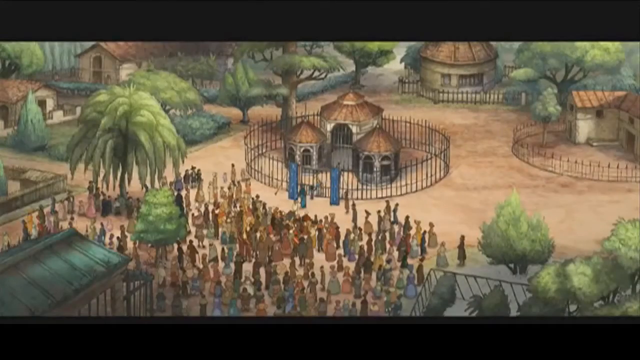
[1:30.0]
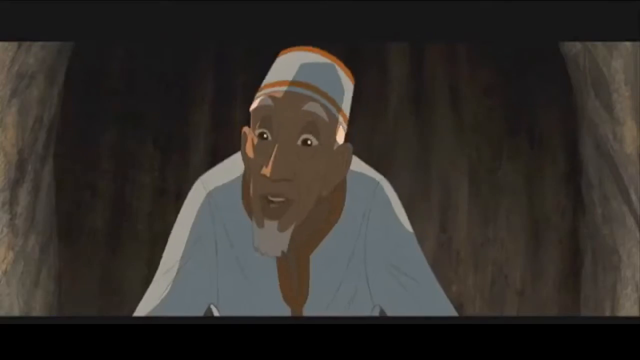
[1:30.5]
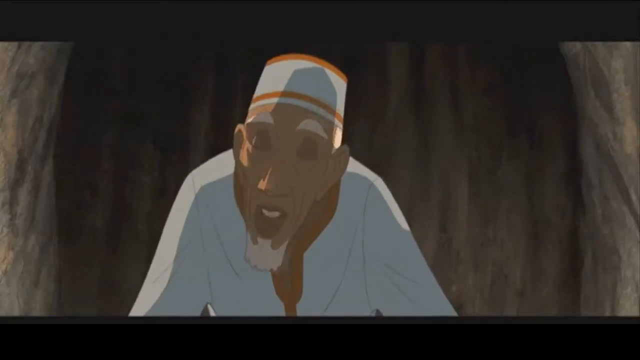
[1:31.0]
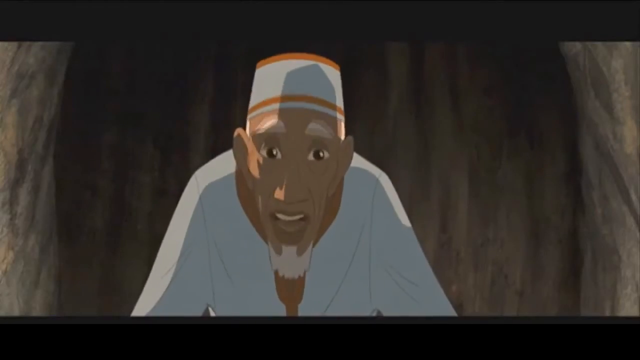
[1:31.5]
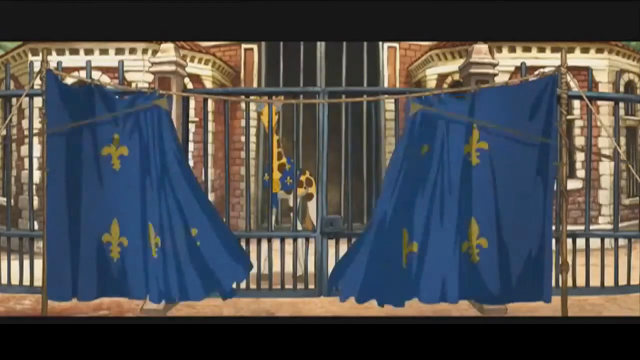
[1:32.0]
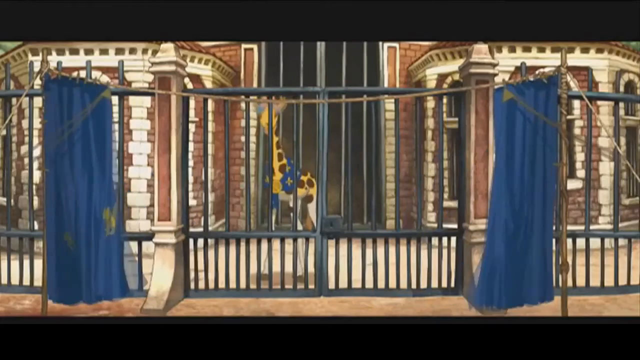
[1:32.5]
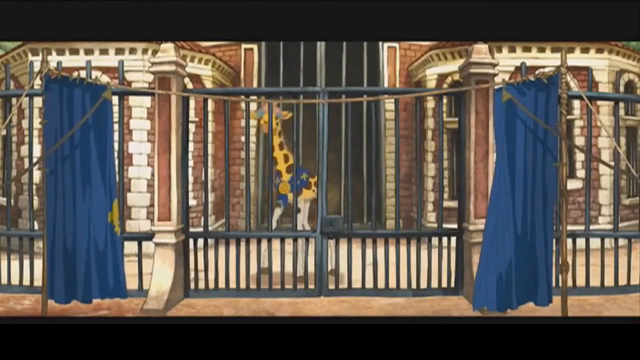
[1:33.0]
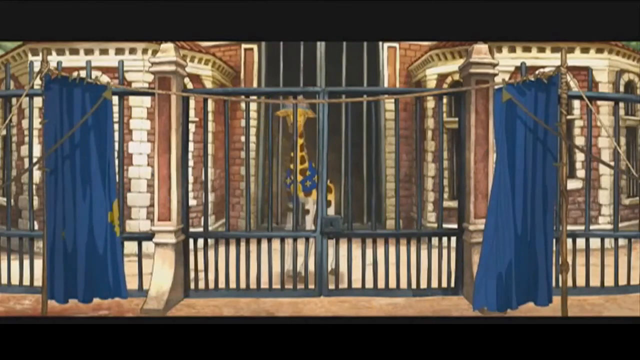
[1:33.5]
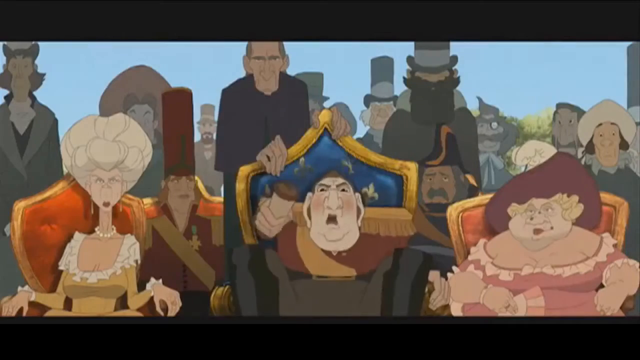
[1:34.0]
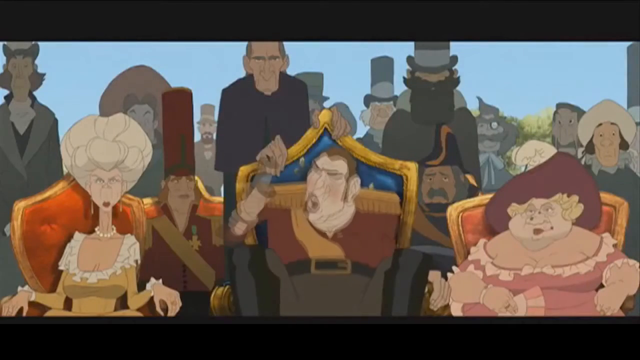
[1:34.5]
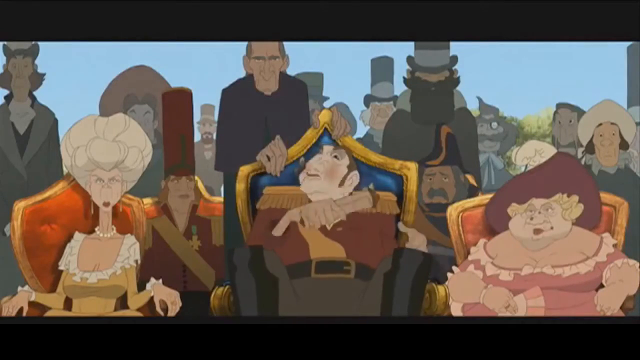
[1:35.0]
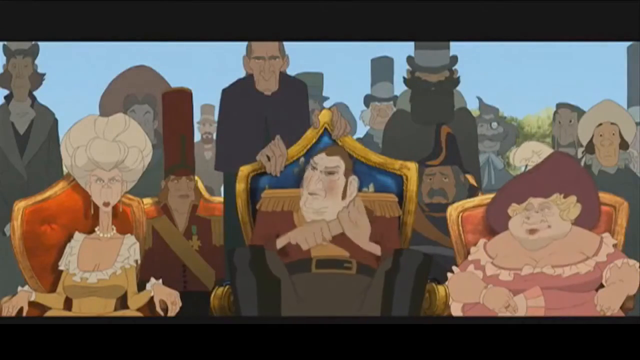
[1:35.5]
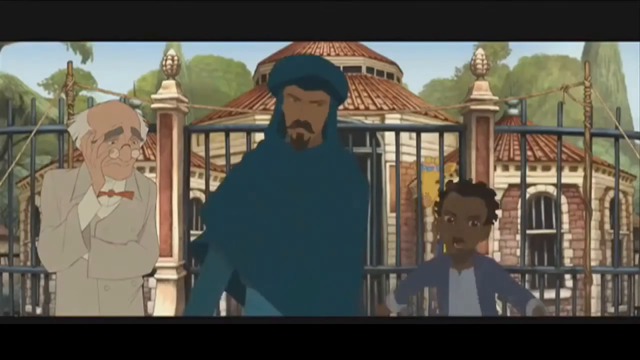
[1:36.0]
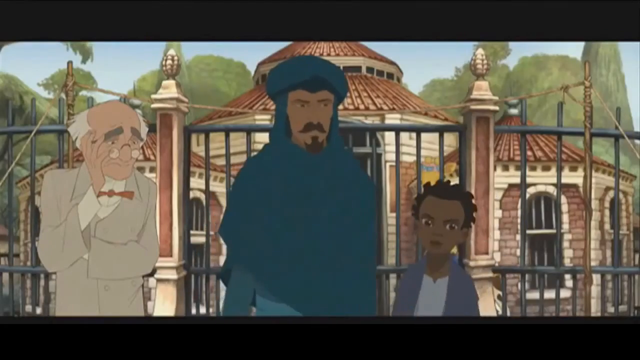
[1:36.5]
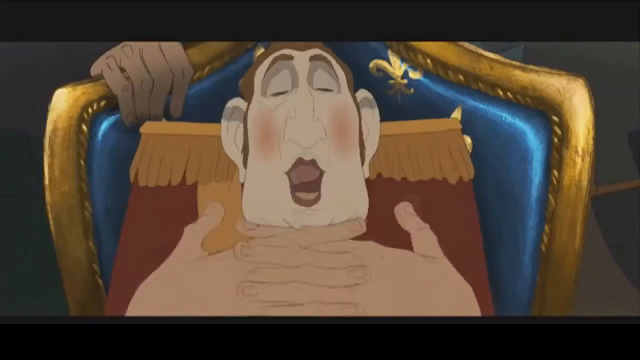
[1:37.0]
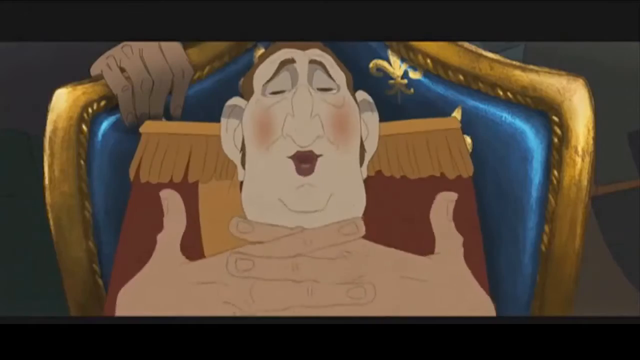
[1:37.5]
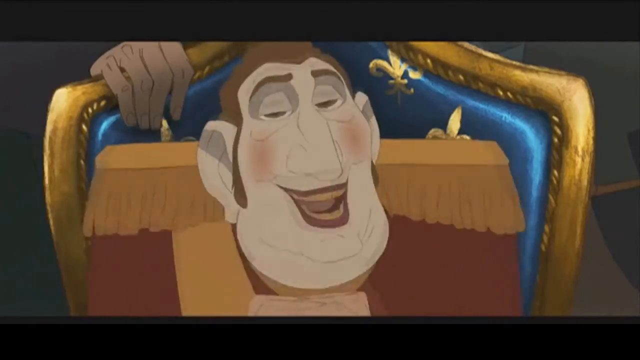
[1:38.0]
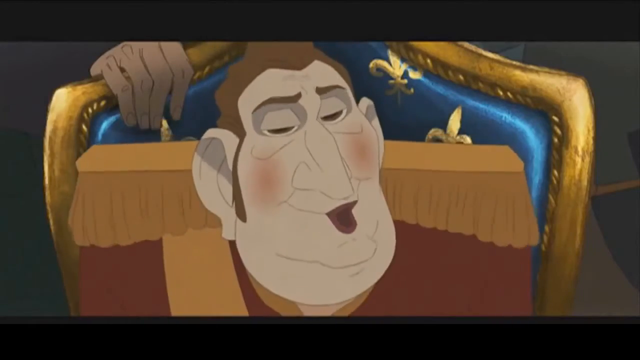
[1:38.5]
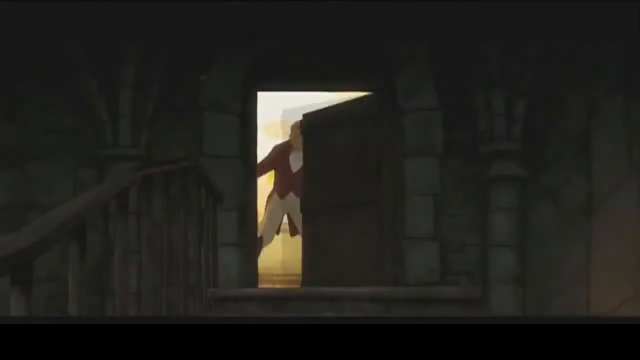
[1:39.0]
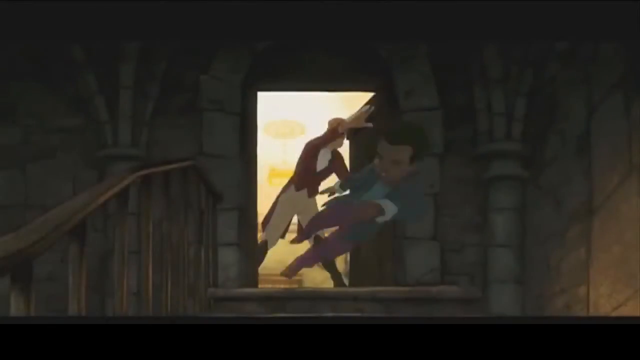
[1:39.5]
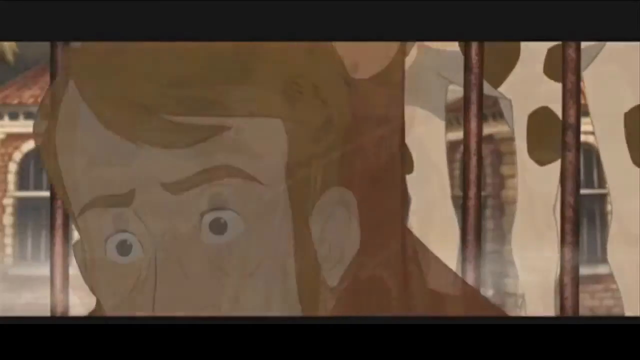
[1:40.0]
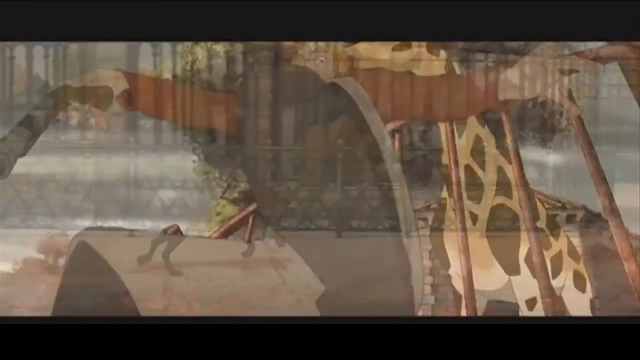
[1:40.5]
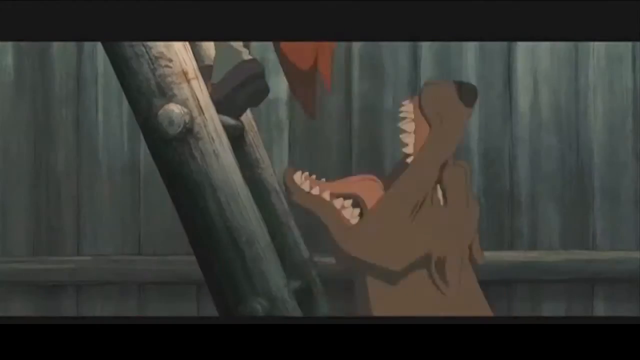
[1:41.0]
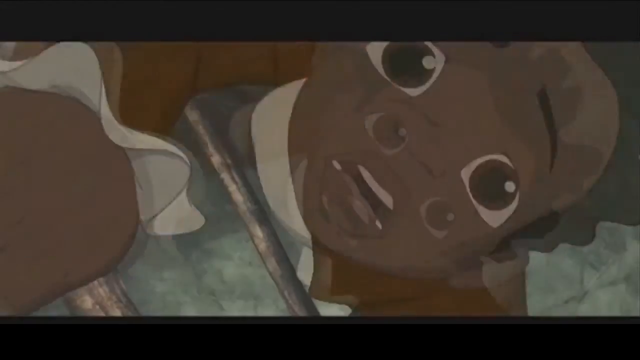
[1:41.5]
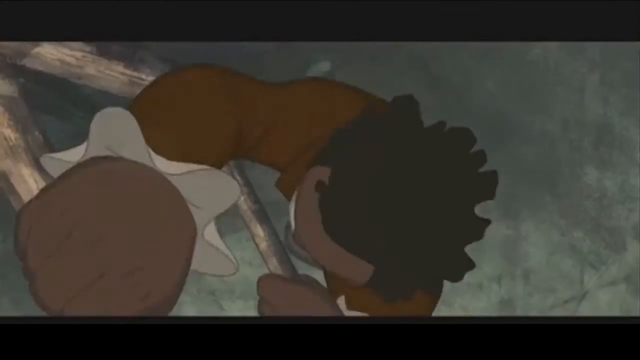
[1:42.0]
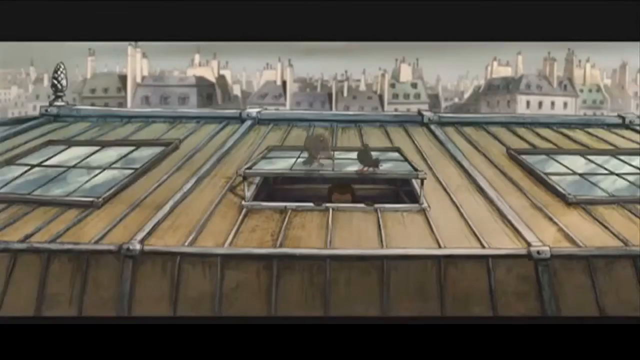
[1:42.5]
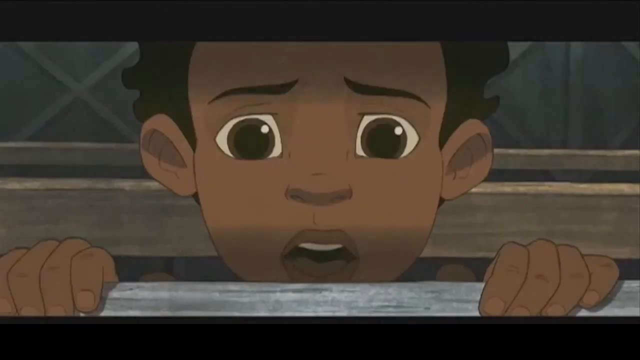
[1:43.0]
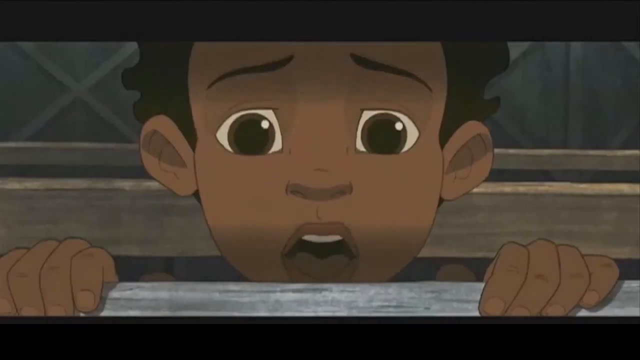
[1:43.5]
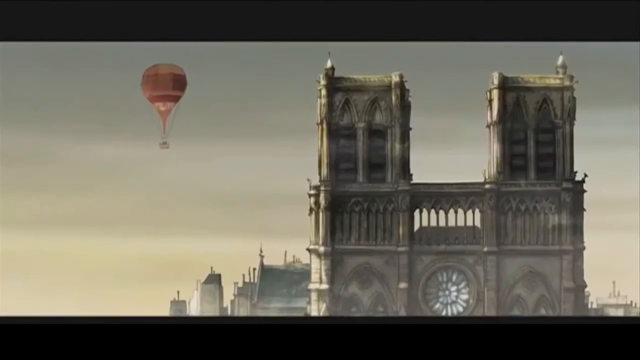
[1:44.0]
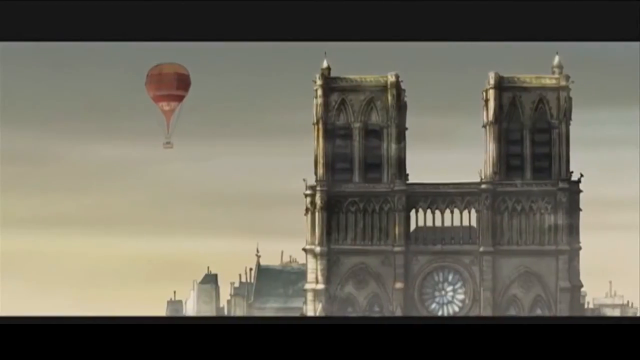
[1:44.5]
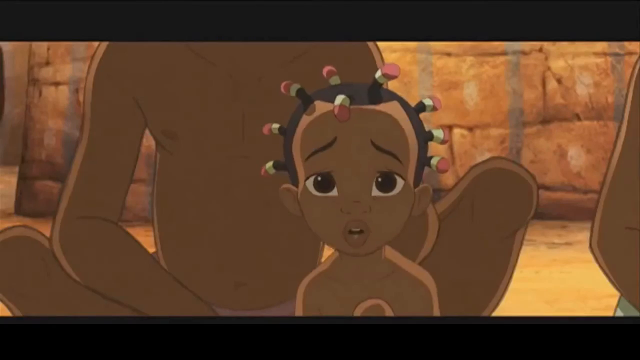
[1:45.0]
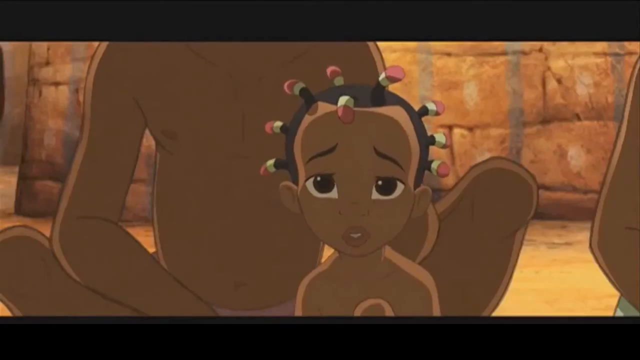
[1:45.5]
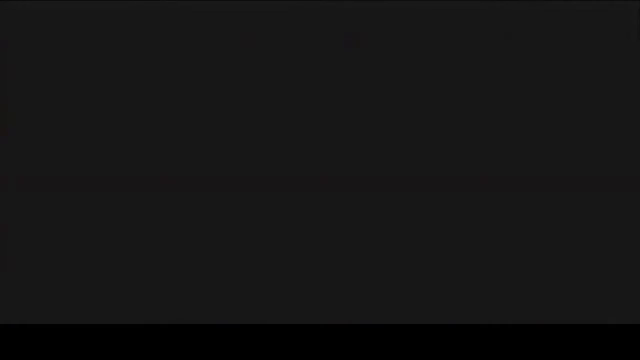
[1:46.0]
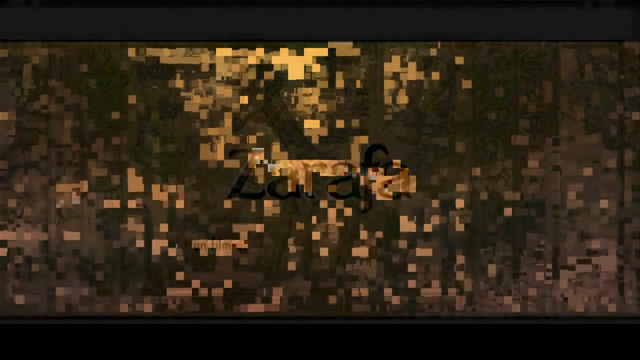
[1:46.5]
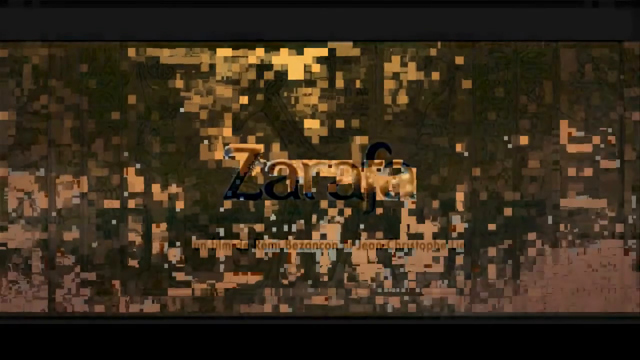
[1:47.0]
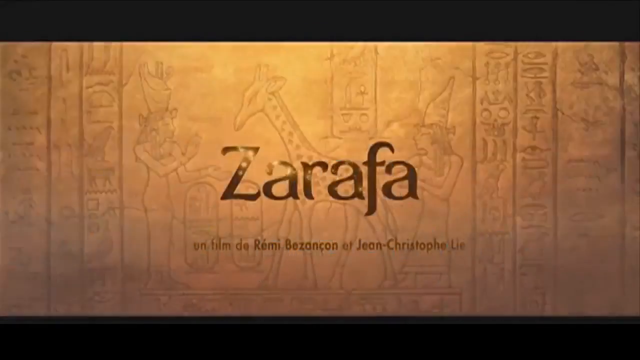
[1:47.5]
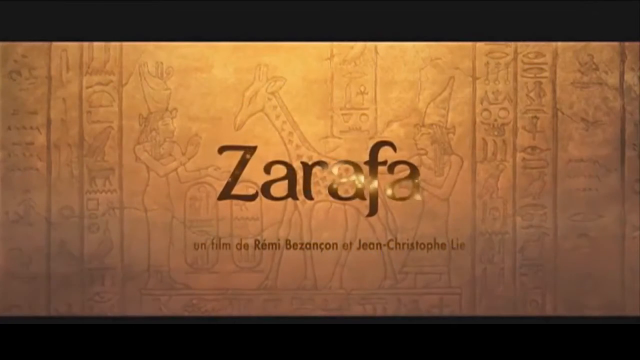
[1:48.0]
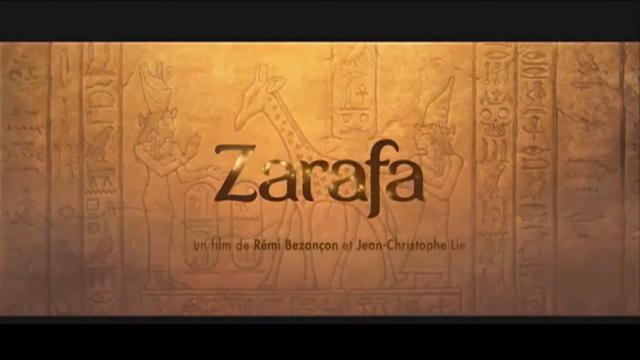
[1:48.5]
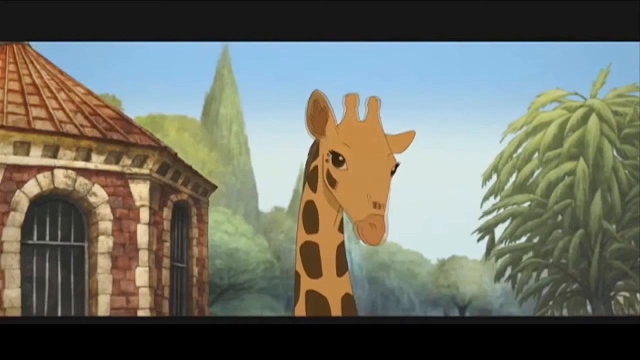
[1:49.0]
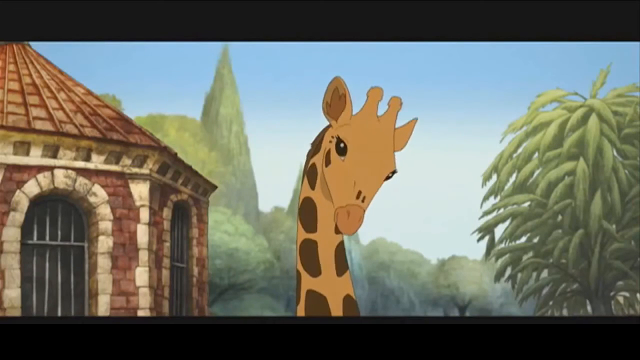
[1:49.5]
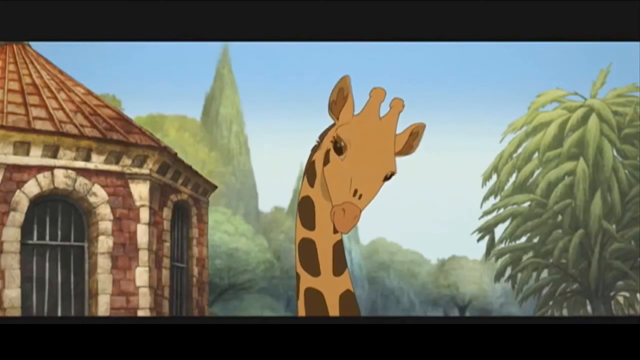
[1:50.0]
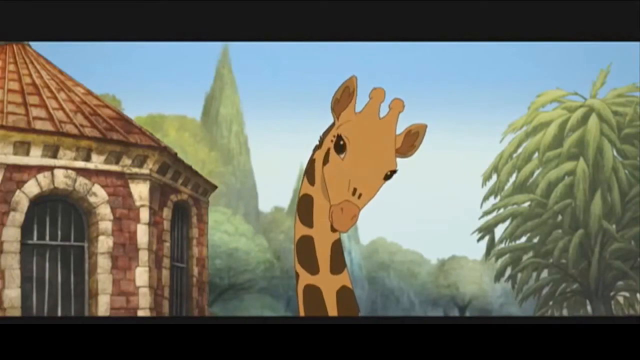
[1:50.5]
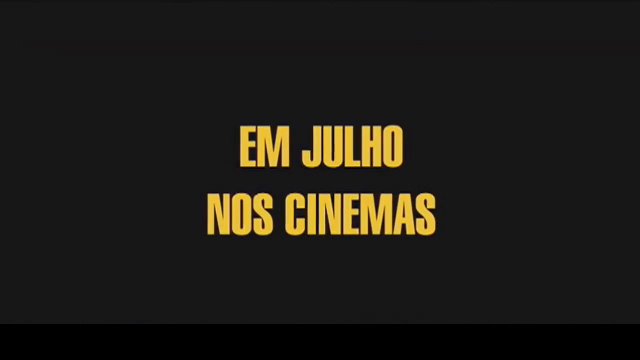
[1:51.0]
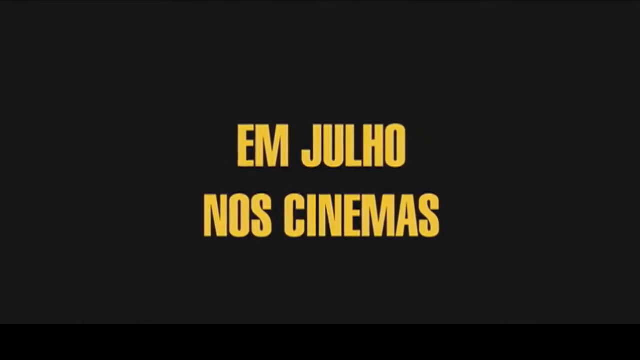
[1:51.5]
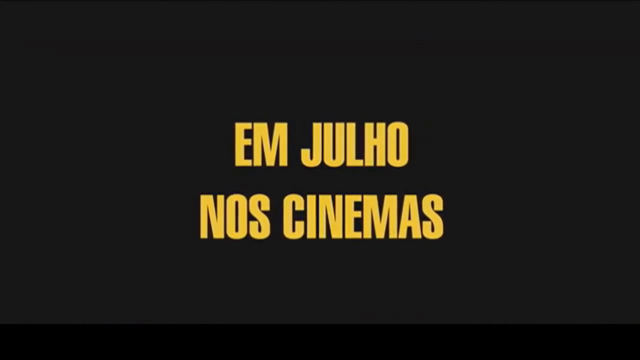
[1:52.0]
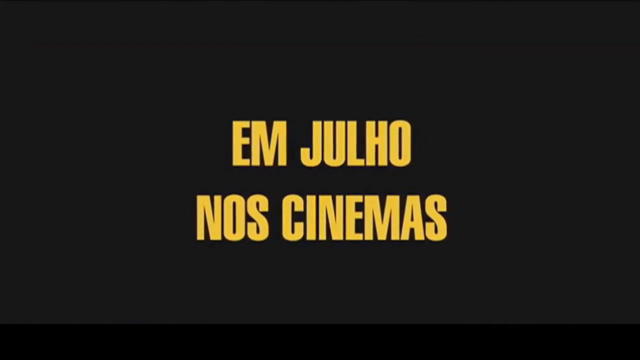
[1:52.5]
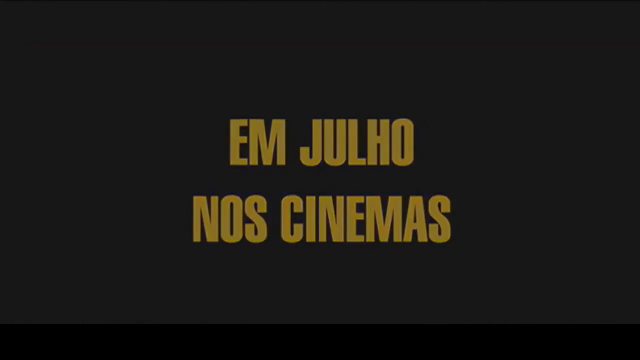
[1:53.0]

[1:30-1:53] The trailer for the animated film Zarafa shows various scenes of a giraffe and a group of people traveling with it. The giraffe appears to be in a zoo, coming from behind a gate over which hang blue curtains covered in fleur-de-lis. The curtains are pulled back, revealing the giraffe standing behind the gate wearing what looks like a blanket over its back with the same dark blue background and fleur-de-lis. The scene switches to a group of people in European dress, three of them in front who look like they could be nobility or royalty. A man in the center sits in a large gold chair with a gold frame and blue upholstery with fleur-de-lis on the back; he looks slightly arrogant and haughty. Next, a man in Middle Eastern dress with a blue turban and a scarf coming down around his face and shoulders, a light-skinned man in a suit with his arms crossed, and a little boy who looks dark-skinned with black hair stand in front of the gate looking at the people in front of them, looking upset. The scene switches once more to the man in the tall chair, who appears to have makeup on his face, with very yellow teeth and exaggerated expressions. The little boy is thrown into what looks like a dungeon, and the giraffe picks somebody up by the back of his jacket and lifts him over the gate. The little boy climbs a wooden ladder as a wolf bites at his pants, then climbs up through a transom window and looks out of it. A scene of what looks like Notre Dame in Paris shows a hot air balloon traveling behind it. A young child who appears to be African looks straight ahead and speaks, before the title screen with the name "Zarafa" appears, with French text below it saying it is a film by Rémi Bezancon and Jean-Christophe Lie.